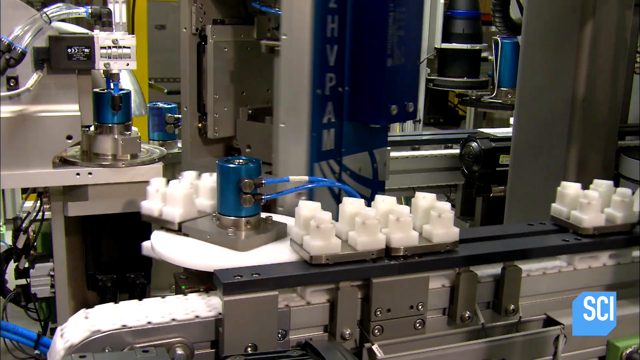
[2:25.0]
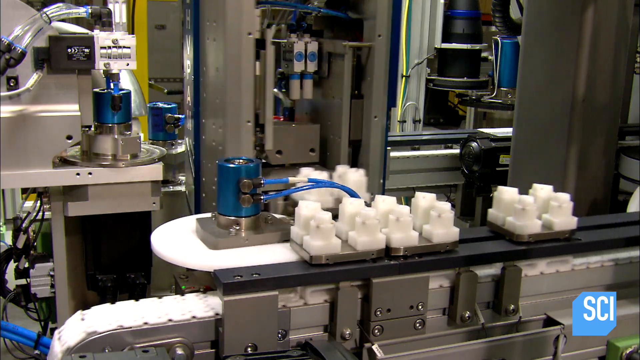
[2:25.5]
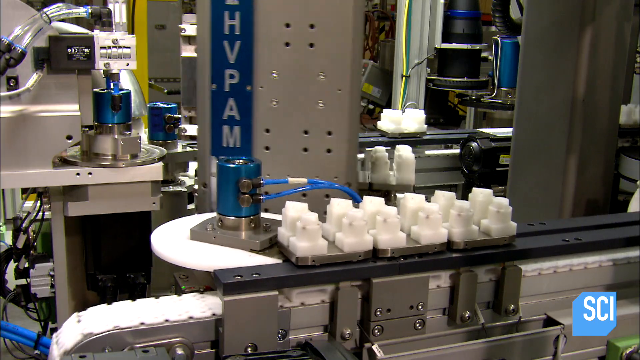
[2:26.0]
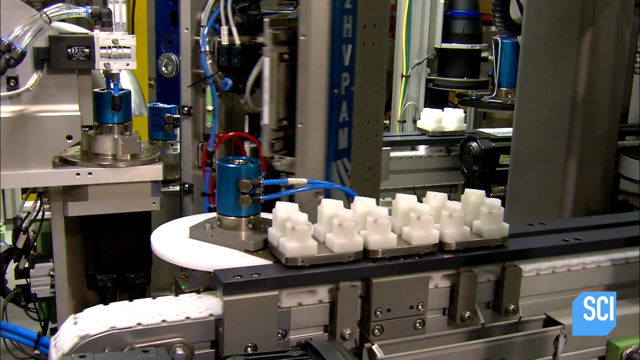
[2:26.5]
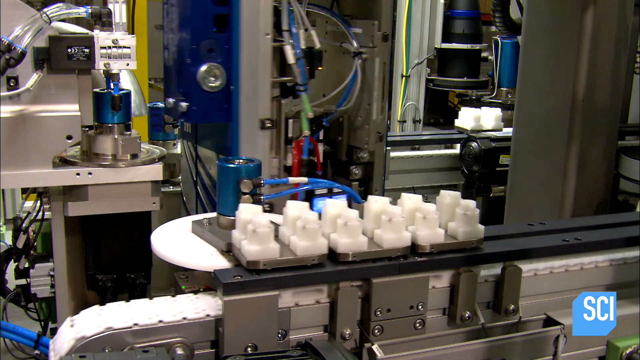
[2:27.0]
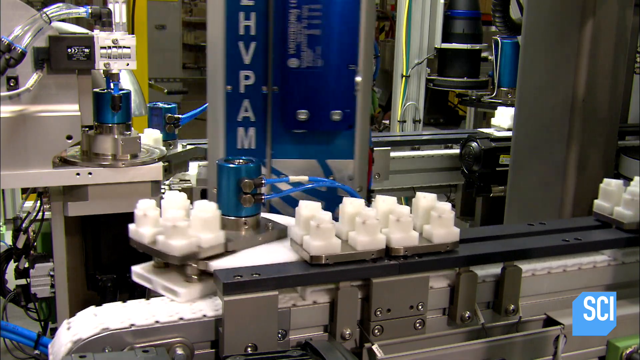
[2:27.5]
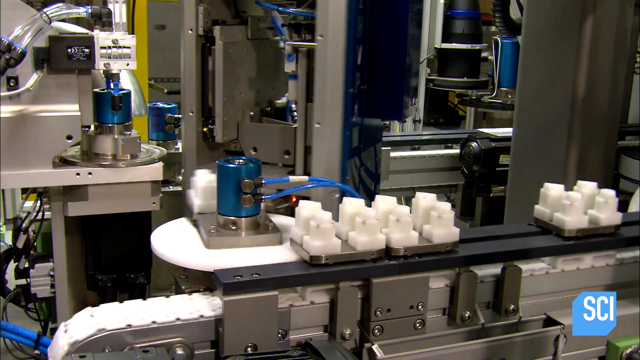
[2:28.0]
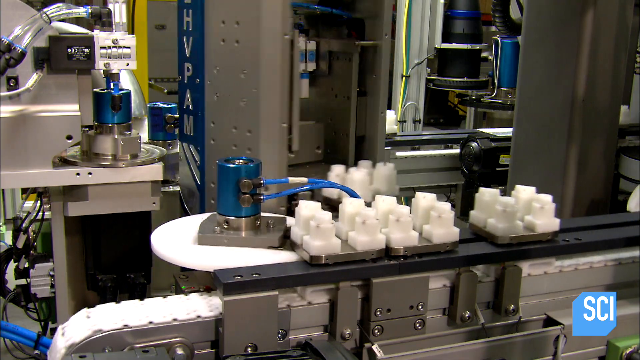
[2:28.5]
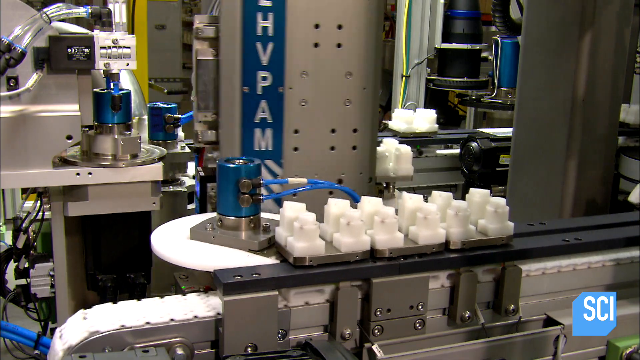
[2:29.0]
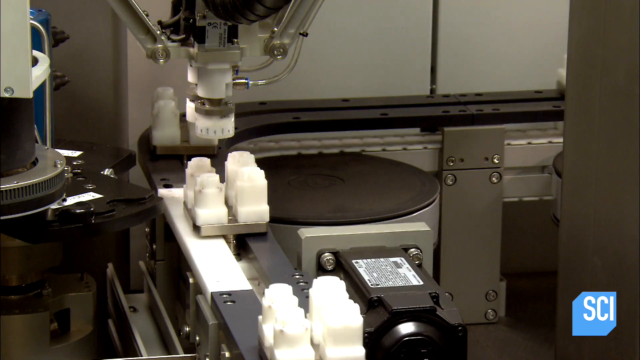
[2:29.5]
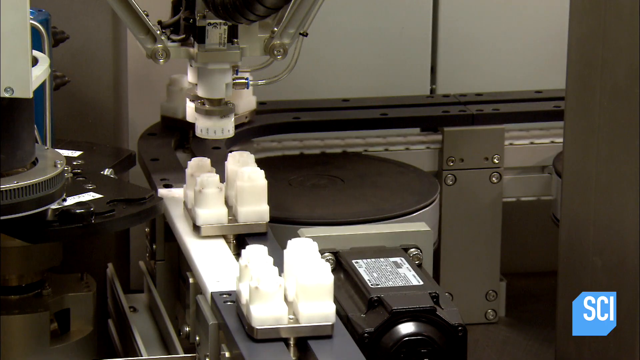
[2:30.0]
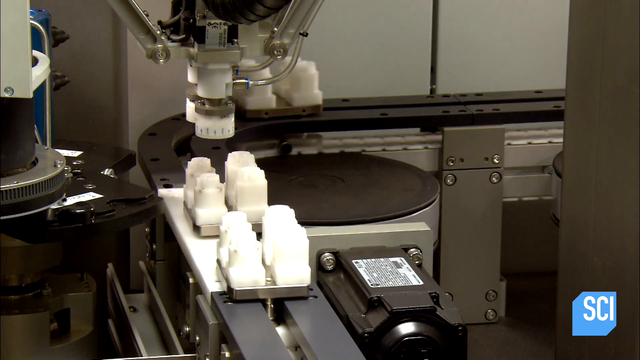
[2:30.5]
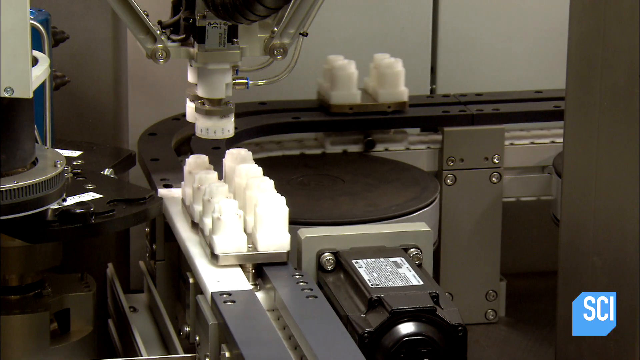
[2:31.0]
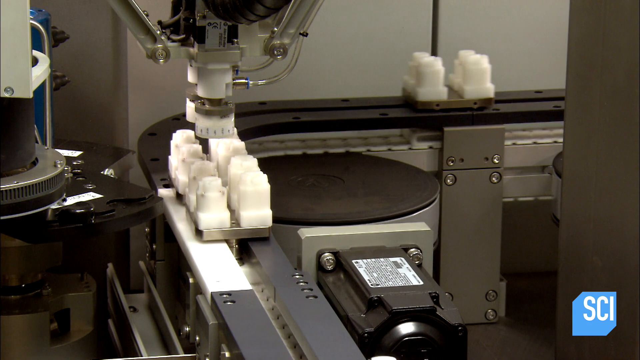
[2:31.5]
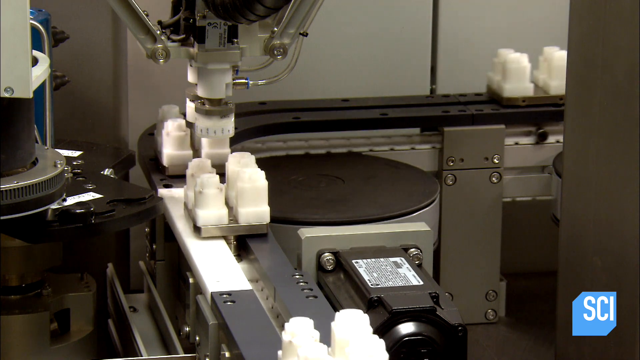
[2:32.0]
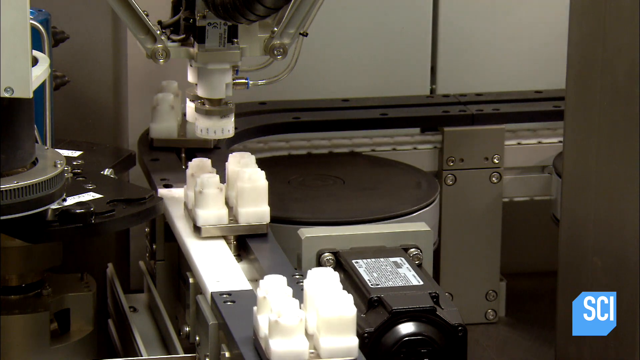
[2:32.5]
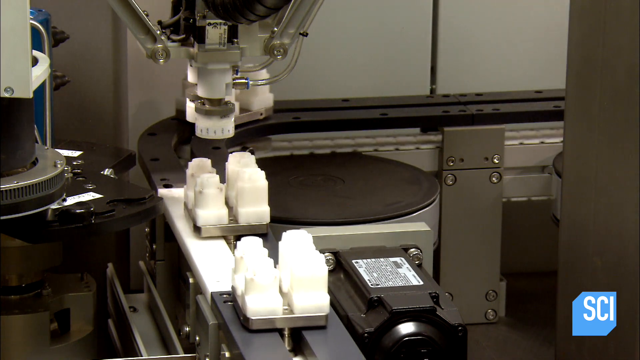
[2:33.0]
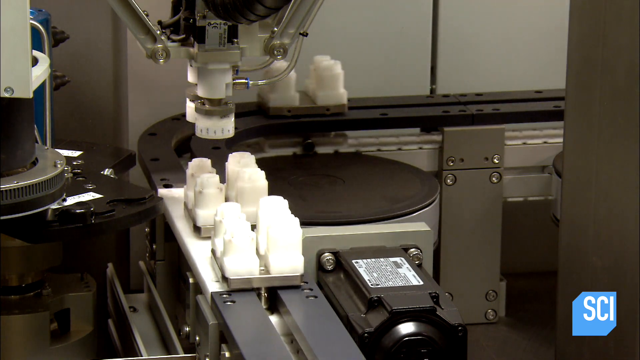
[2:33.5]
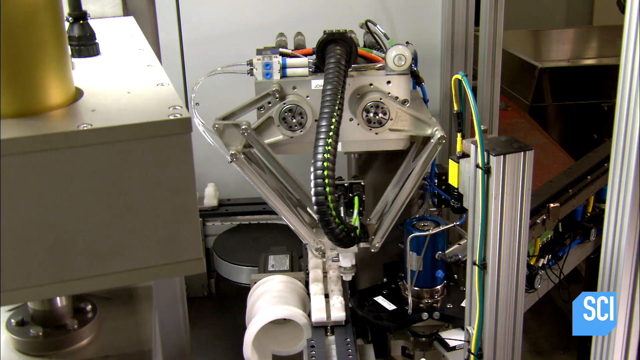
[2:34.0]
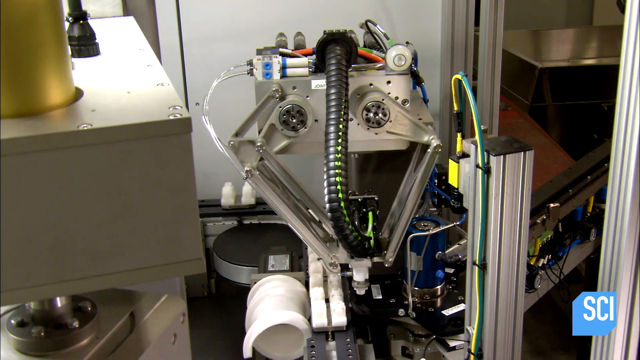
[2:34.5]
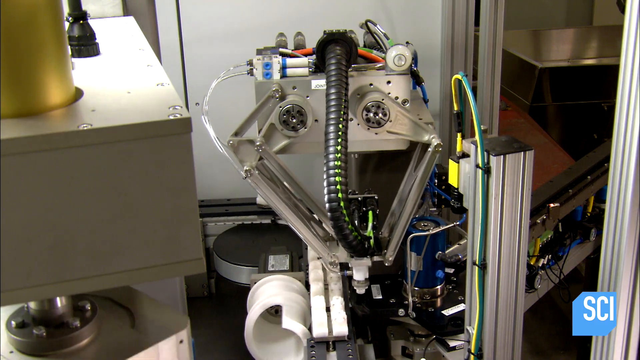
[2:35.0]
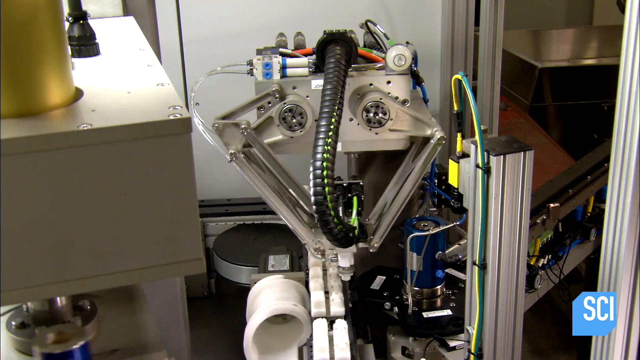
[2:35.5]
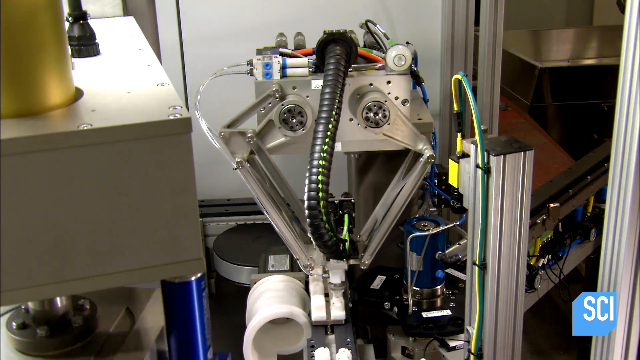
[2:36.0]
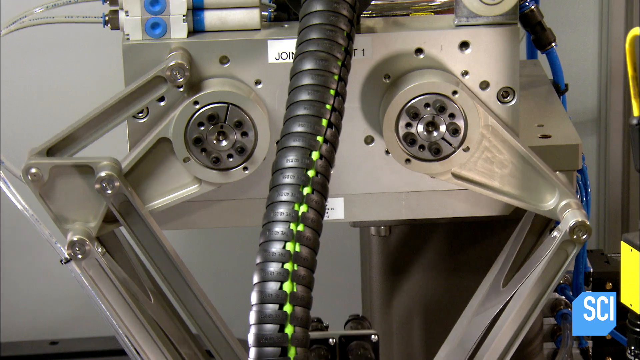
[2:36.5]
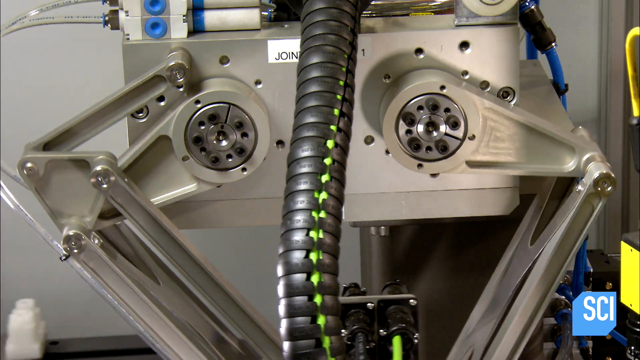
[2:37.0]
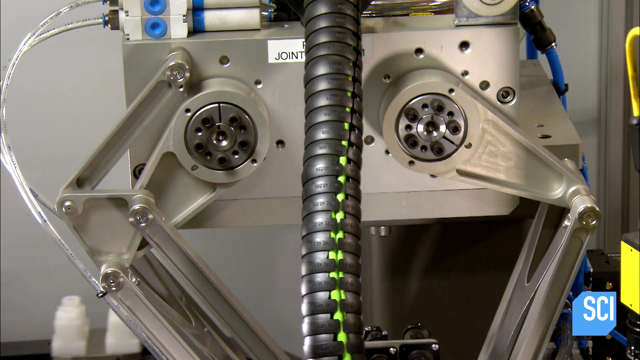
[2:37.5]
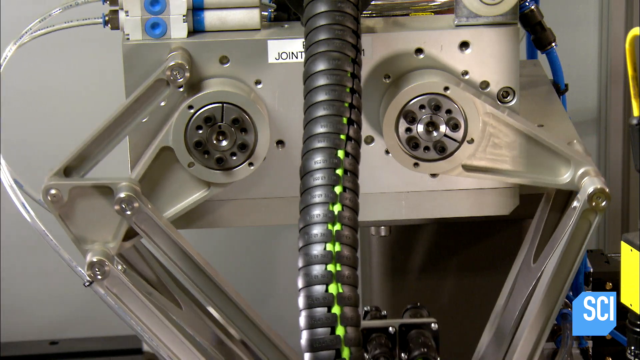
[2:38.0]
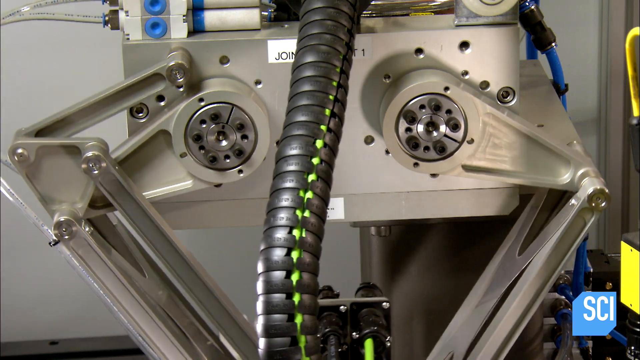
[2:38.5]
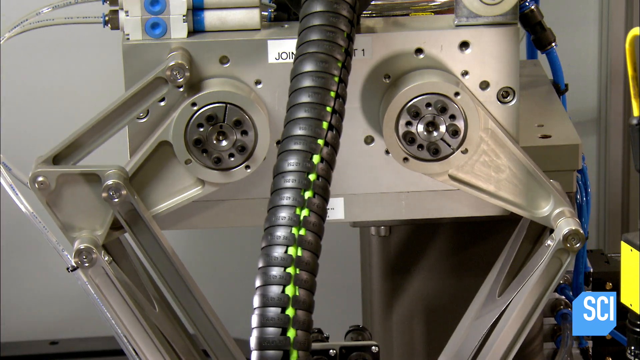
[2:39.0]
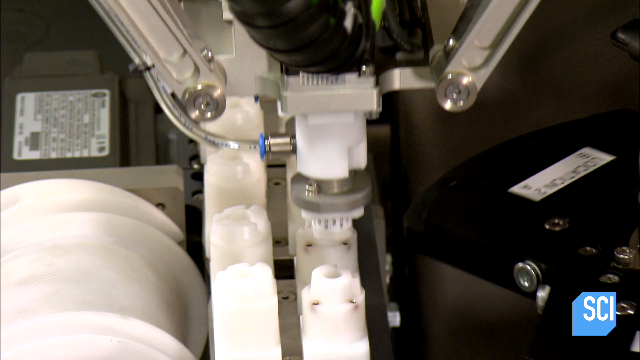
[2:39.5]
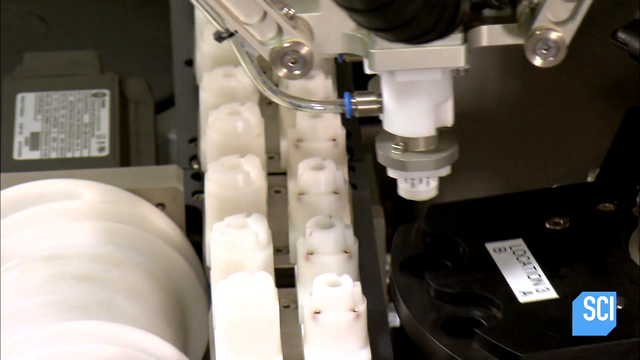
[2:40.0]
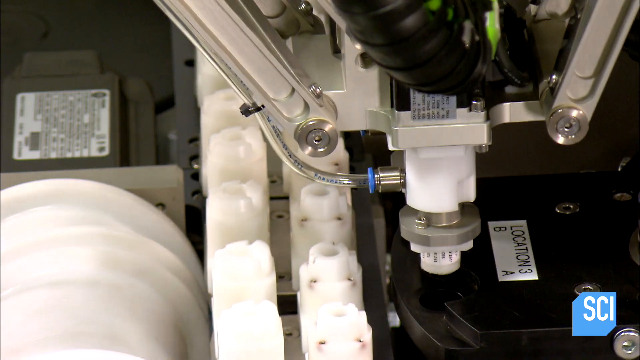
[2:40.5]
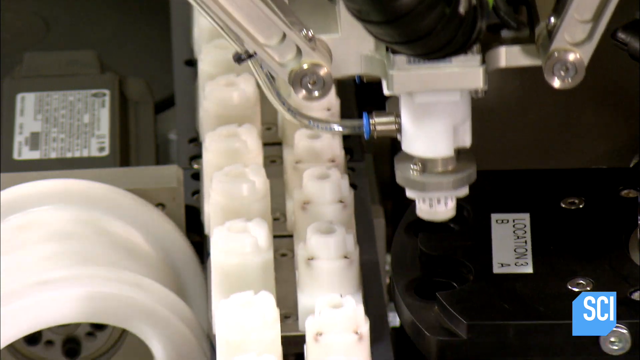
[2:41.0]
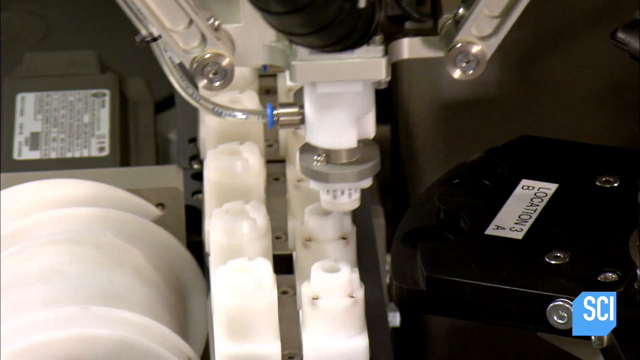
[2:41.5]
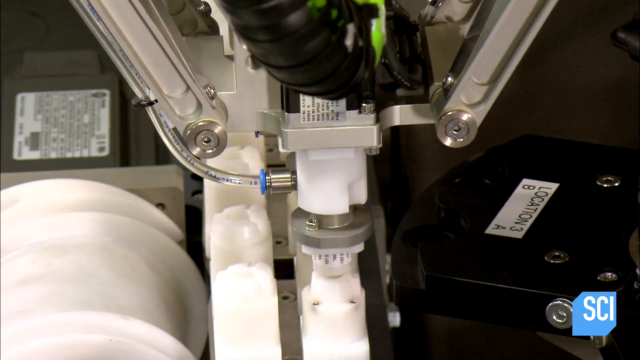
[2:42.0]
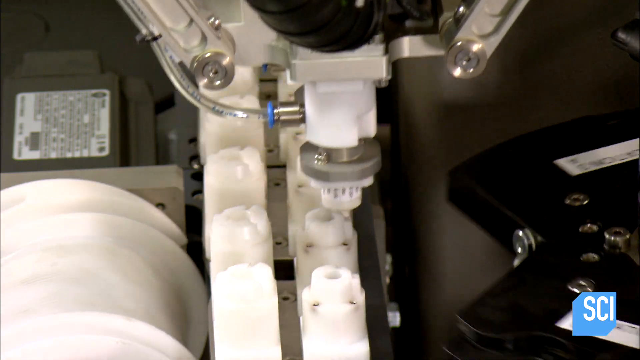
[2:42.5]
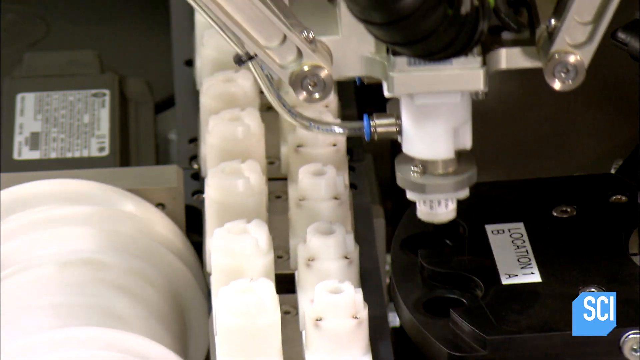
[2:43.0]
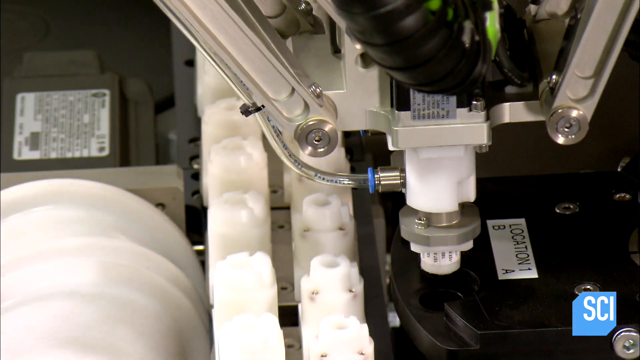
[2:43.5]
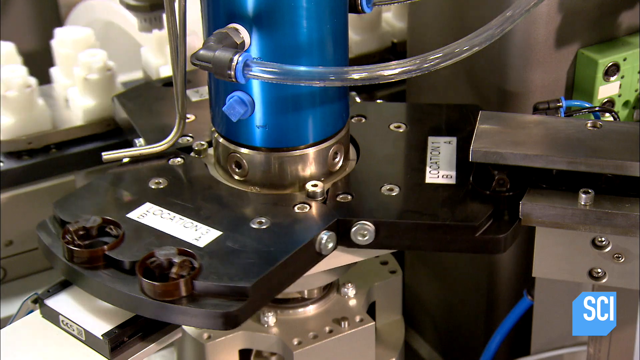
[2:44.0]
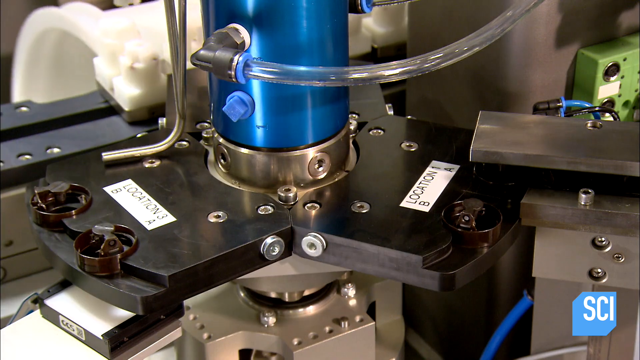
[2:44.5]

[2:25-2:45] A machine and a belt are shown. Apparently the pieces the previous machine put on the belt come down the line. They get stacked up, one piece onto another, and then a large spinning piece spins, for an unclear purpose, and sends the piece on down the line. Machines do other things to these pieces. One of the machines, which is white, moves very slowly back and forth from the white pieces onto a black disc-shaped object that is spinning. The walls are white and the belts are black.